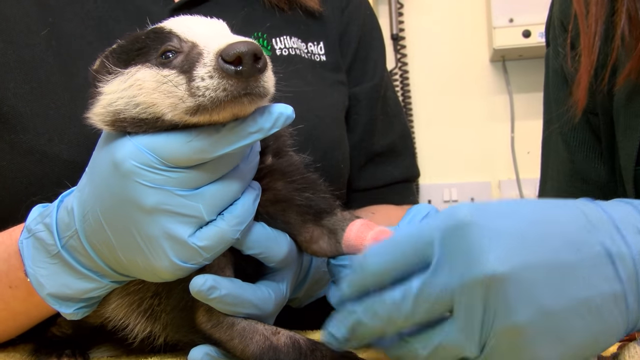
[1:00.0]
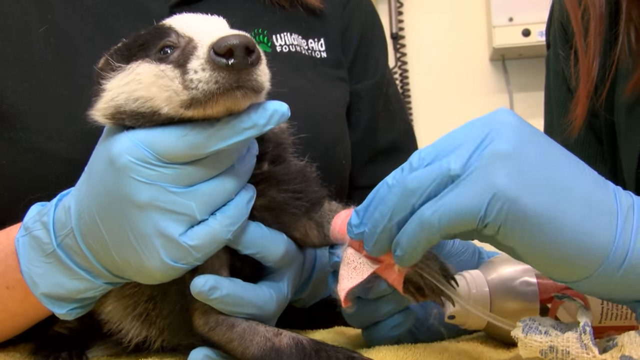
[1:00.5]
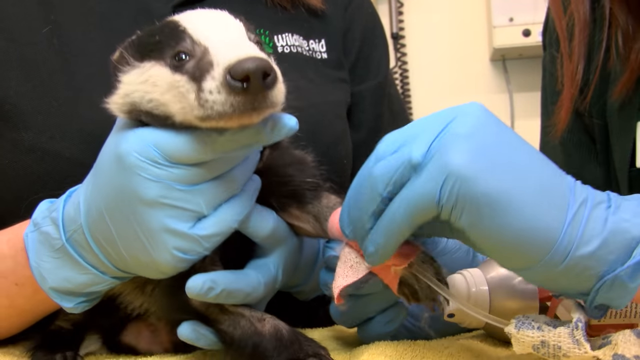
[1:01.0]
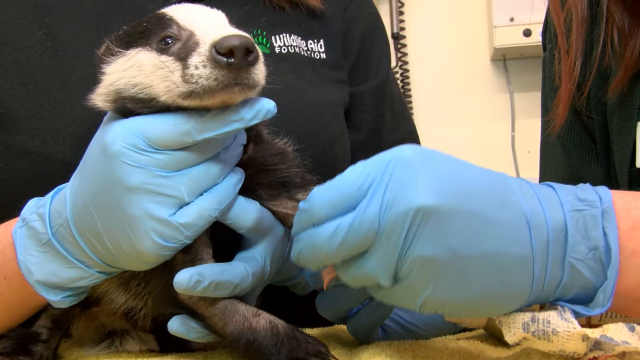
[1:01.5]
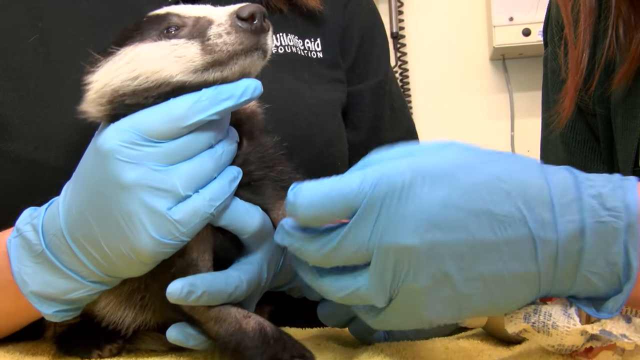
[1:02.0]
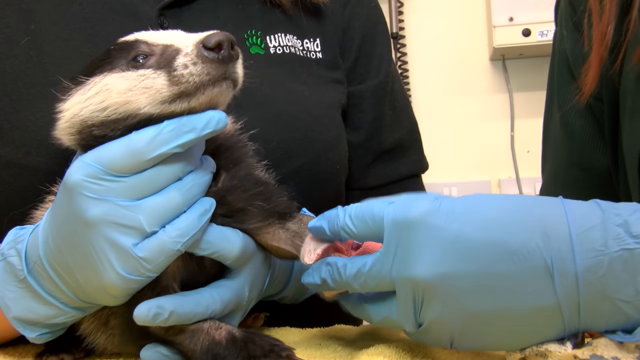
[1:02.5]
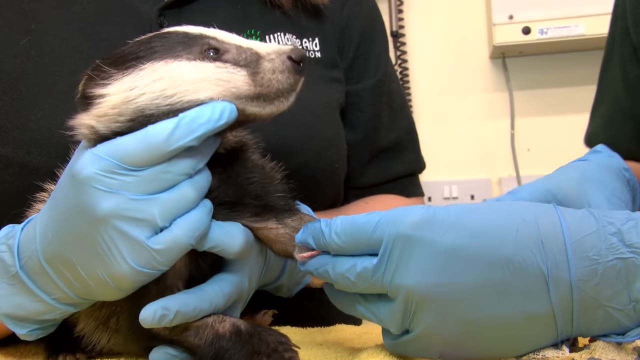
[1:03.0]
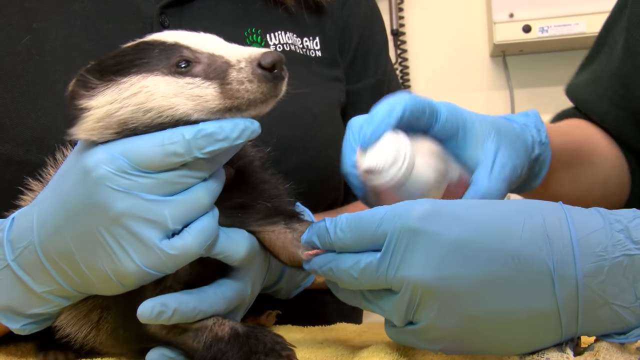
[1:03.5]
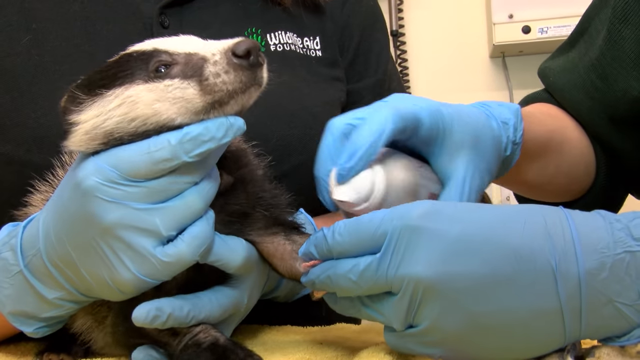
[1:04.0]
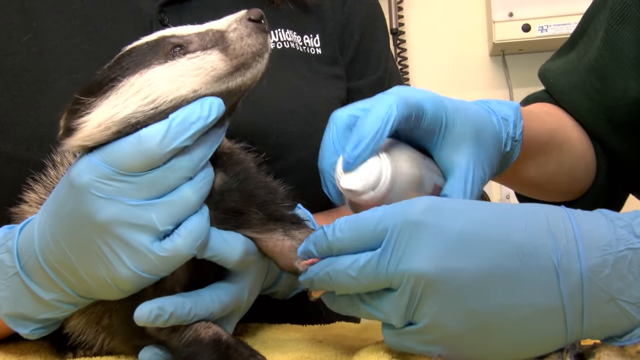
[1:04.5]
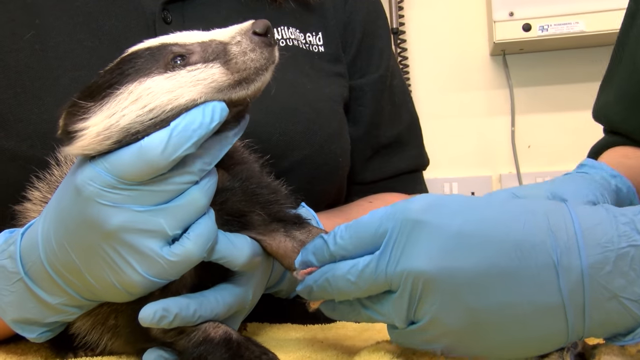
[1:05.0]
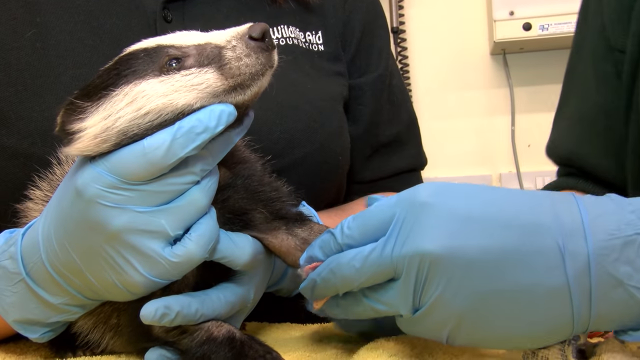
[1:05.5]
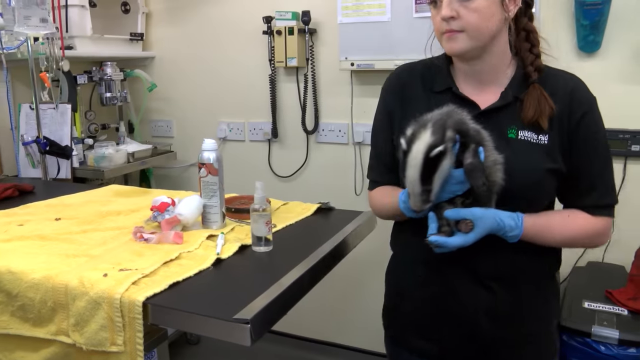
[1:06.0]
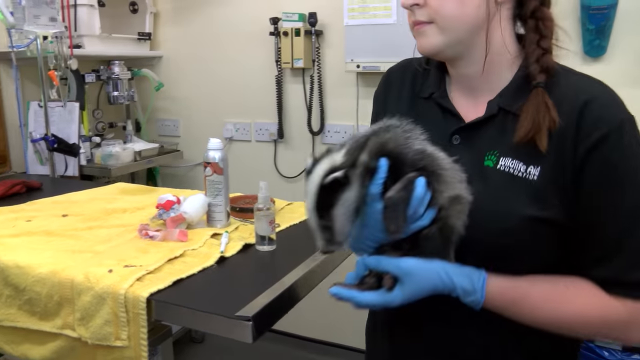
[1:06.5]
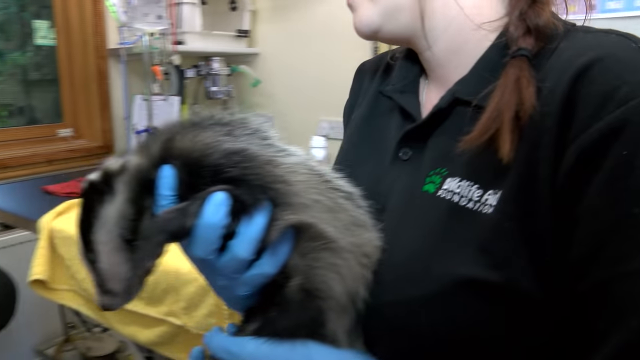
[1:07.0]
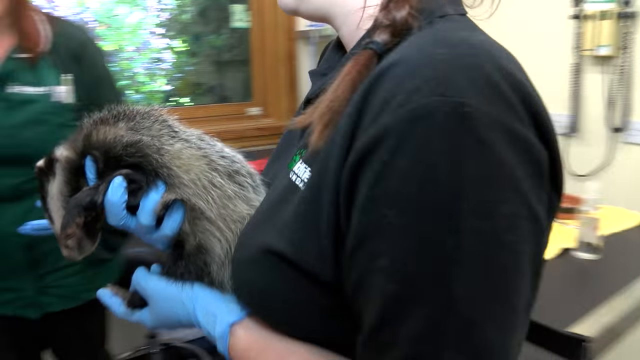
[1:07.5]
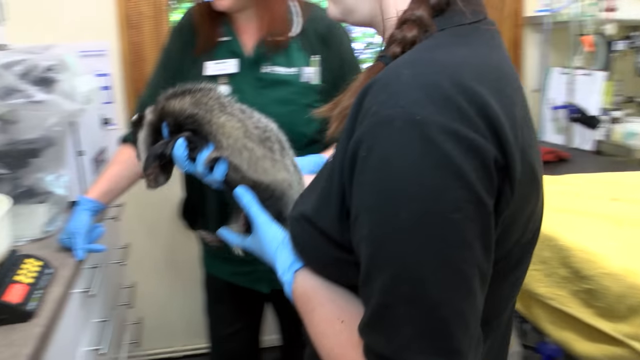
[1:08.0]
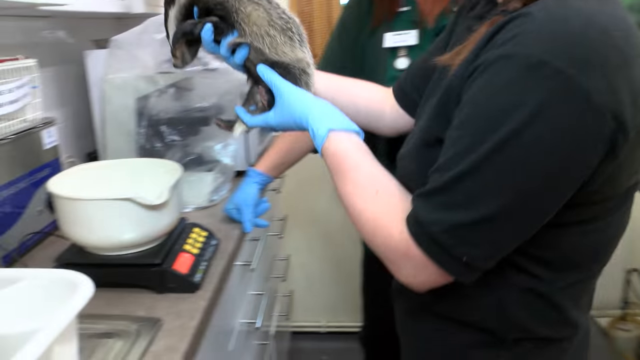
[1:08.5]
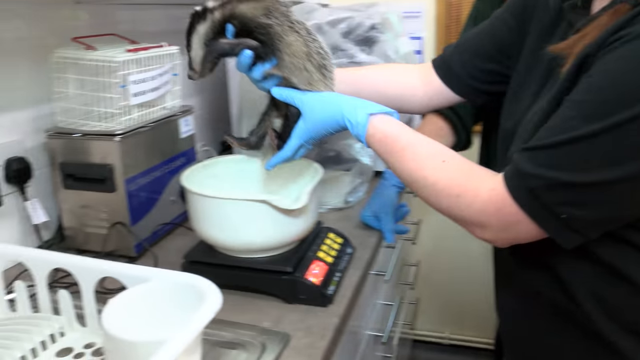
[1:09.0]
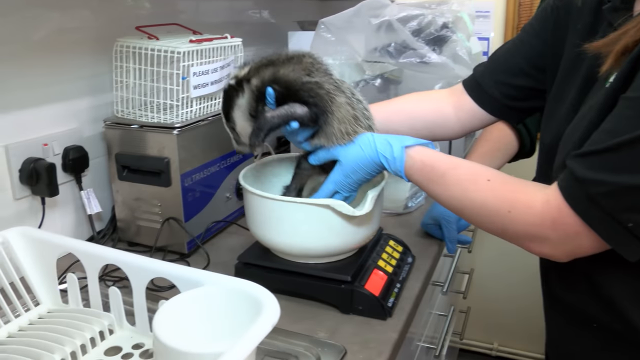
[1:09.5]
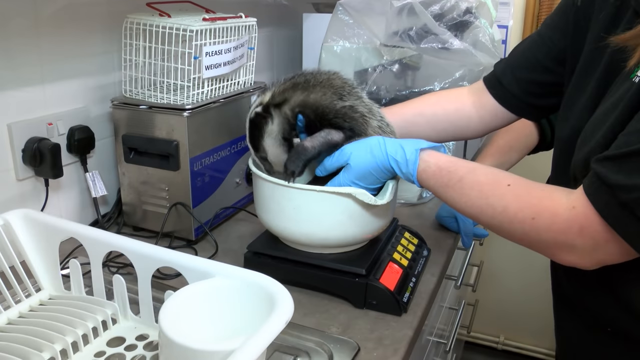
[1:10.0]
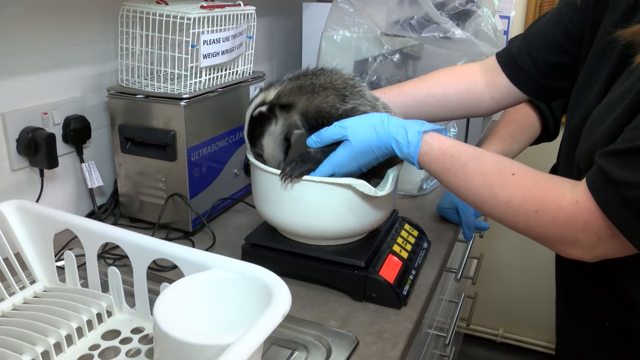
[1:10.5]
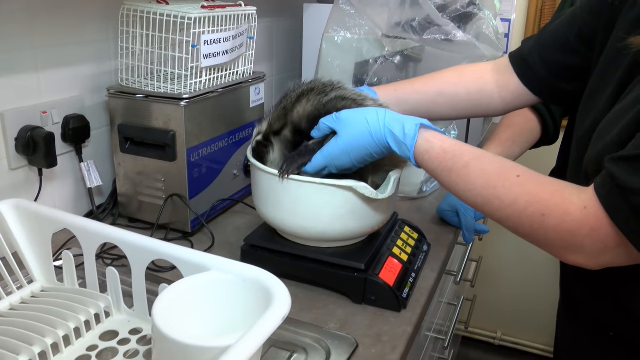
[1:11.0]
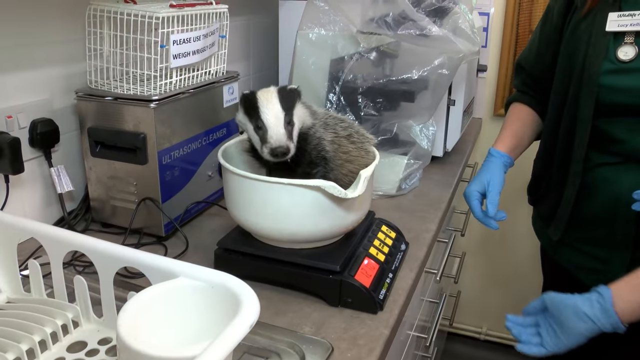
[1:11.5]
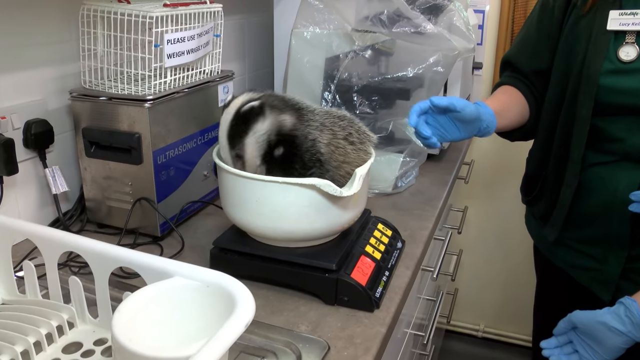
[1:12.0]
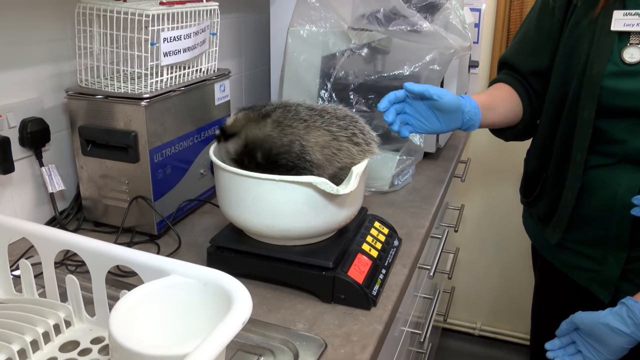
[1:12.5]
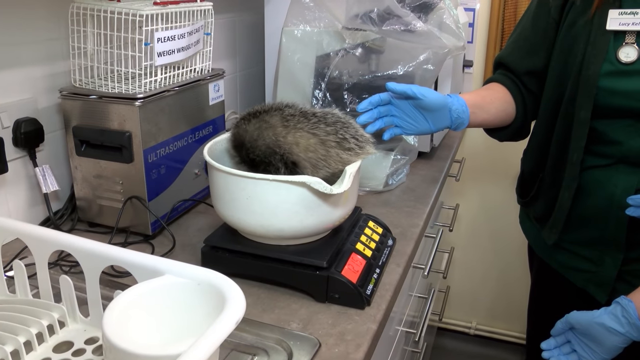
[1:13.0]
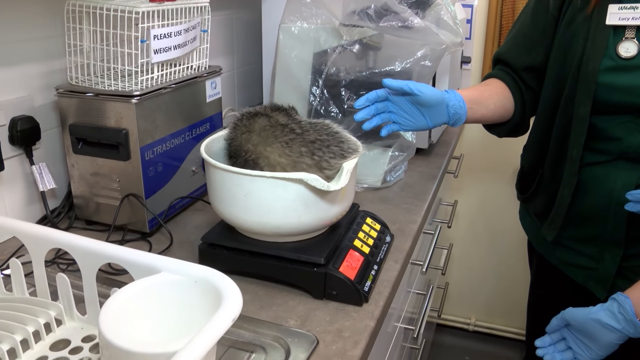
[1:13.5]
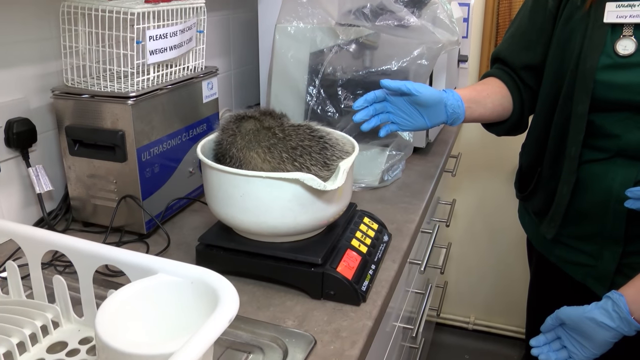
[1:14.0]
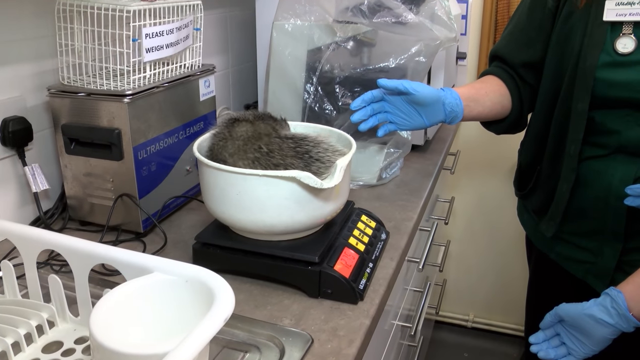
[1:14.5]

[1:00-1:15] The woman in the black shirt holds the badger while the woman in the green shirt unravels the pink band-aid. There seems to be a clear tube connected to it, with what looks like a little clear box. The badger turns around, and she sprays something on it. In the next scene they go over to the scale and weigh the badger. The badger is in a white bowl on the scale, and they look at its weight. The weighing machine is black with some red buttons and some yellow buttons. The badger seems to be turning around and seems to be good.